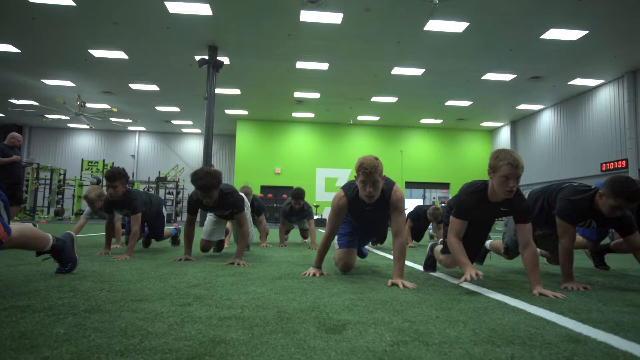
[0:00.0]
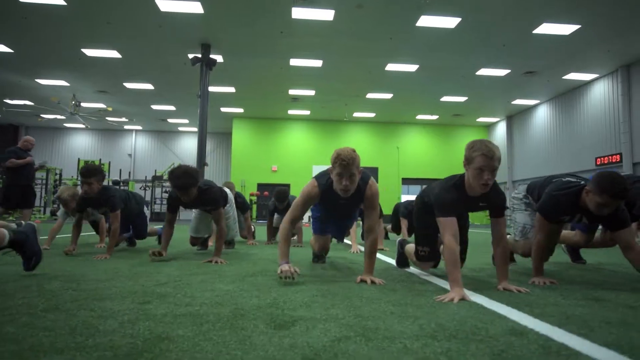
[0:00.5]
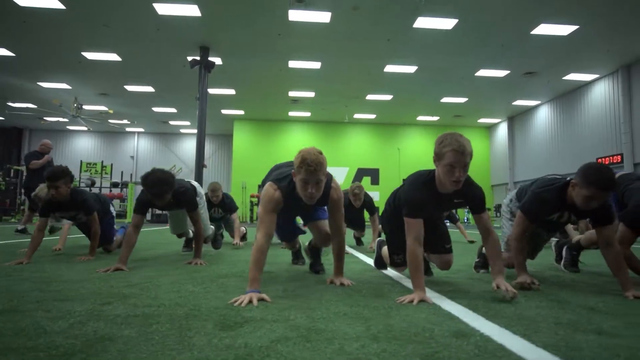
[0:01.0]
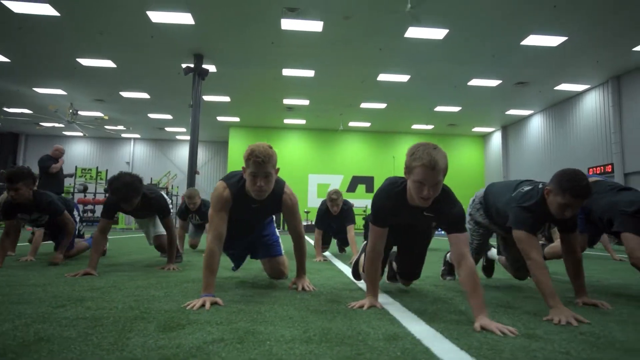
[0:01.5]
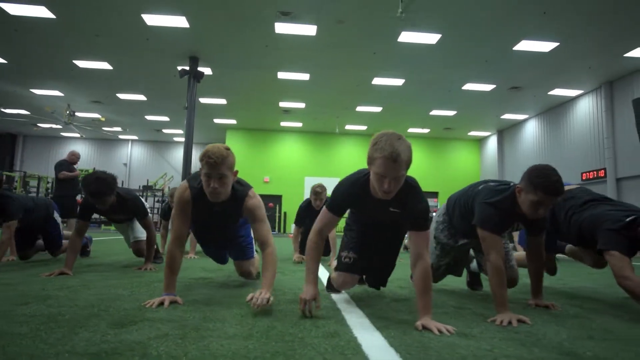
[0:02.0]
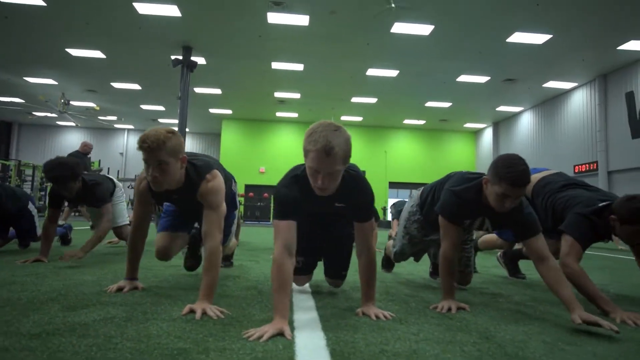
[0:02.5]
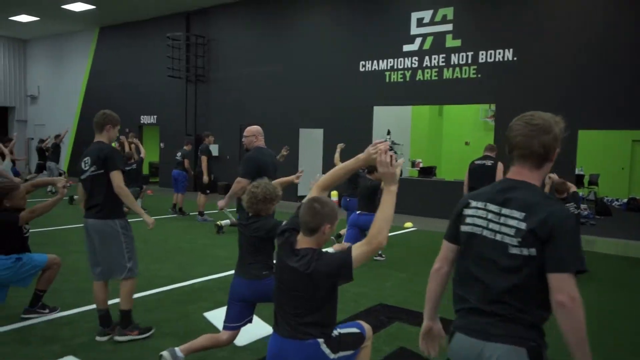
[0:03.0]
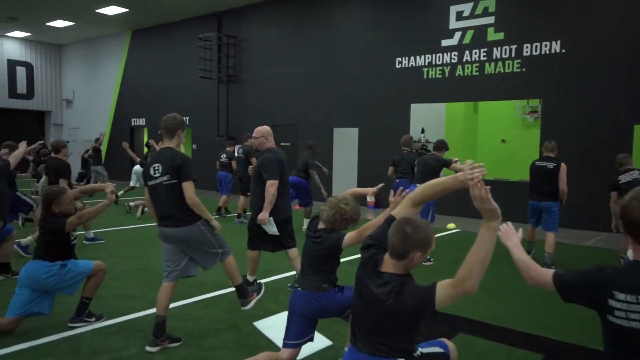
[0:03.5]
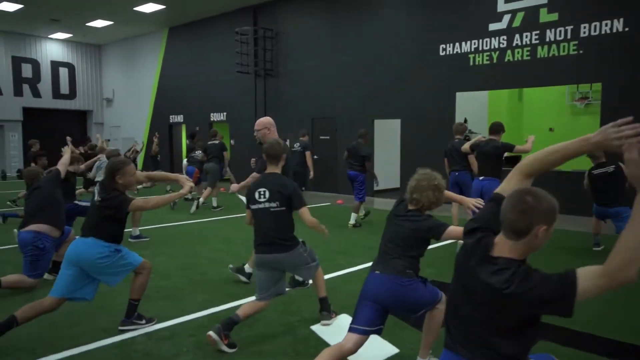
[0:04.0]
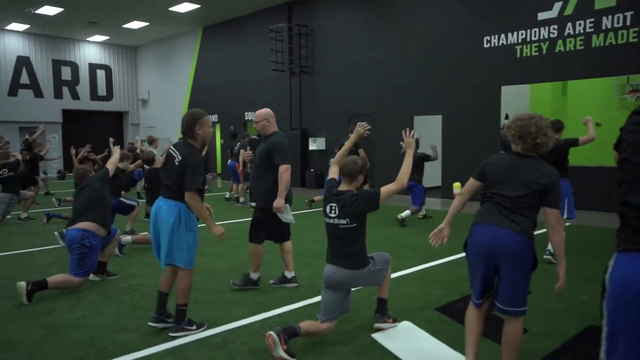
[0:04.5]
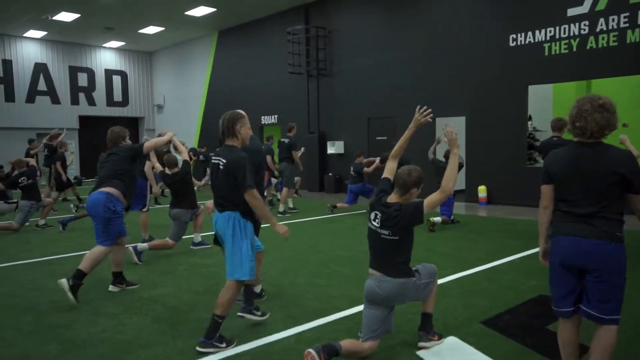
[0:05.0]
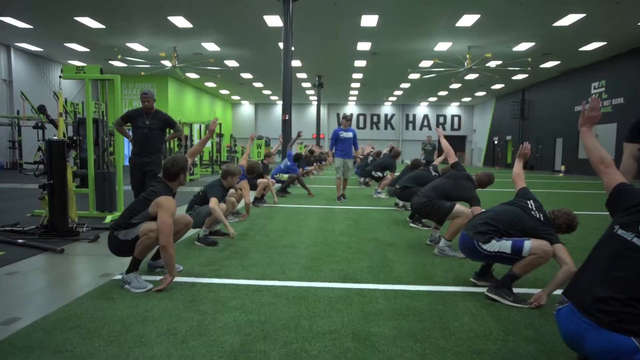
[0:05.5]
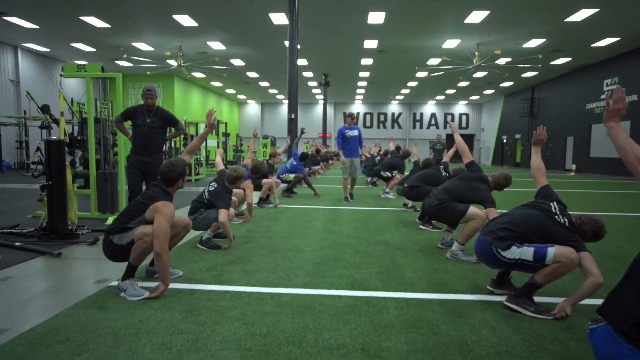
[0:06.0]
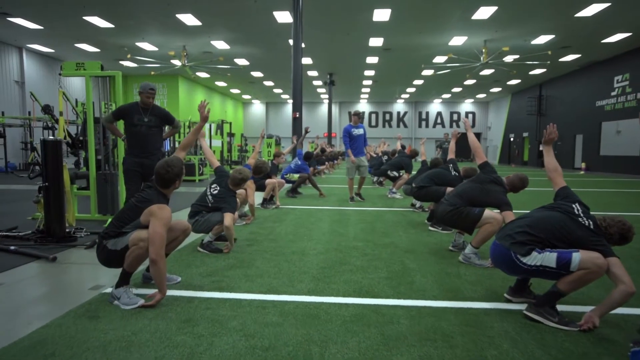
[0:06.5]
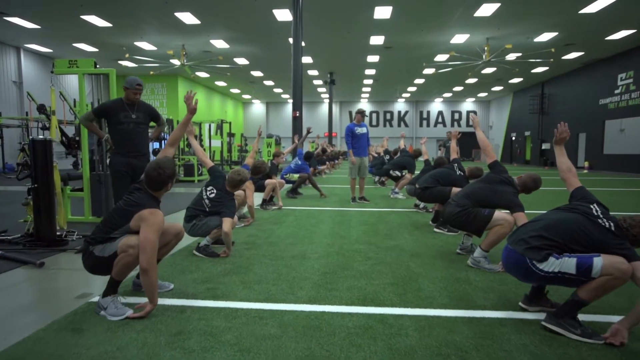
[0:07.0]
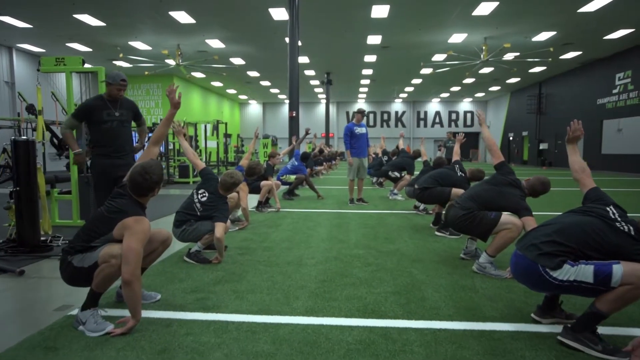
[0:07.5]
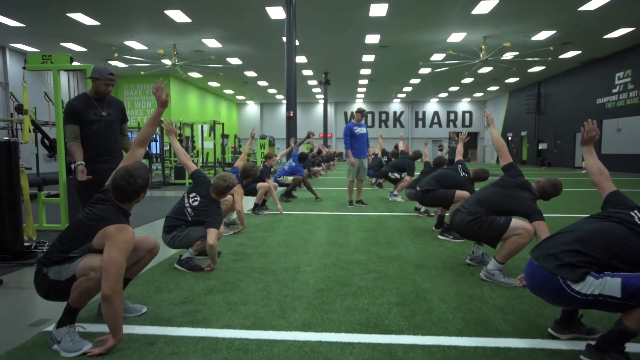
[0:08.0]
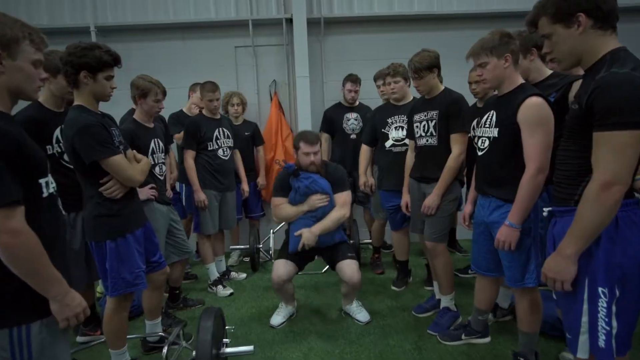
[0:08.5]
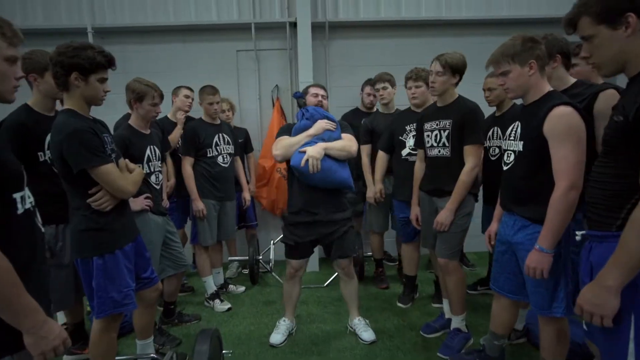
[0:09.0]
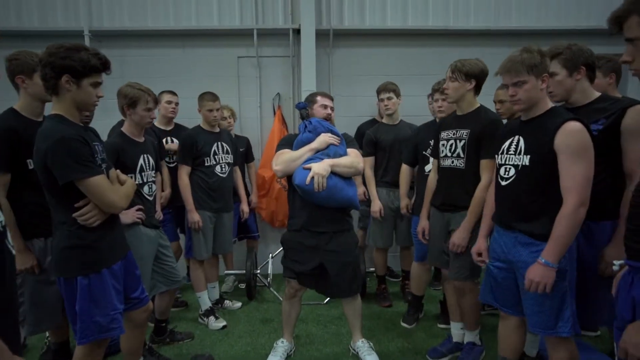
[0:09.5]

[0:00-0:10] About 20 to 25 young people are indoors in what appears to be a gymnasium with artificial turf on the floor. All of them are on the floor on only their hands and the balls of their feet, crawling towards the camera. A different angle of the gym then shows them all on their feet. The wall in front of them is painted black with green and reads "champions are not born, they are made." The young people, who appear to all be young men, do exercises as an instructor walks among them, doing some sort of lunge. Then they are squatted down with one hand on the floor and the other hand raised up, like an inverse triangle. Older gentlemen, presumably instructors, stand among them to help with their form. Next, they are all gathered around a man who picks up what appears to be a sandbag, speaks to a young man, and drops the sandbag.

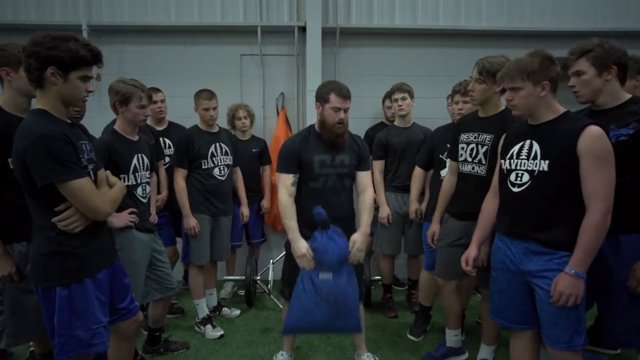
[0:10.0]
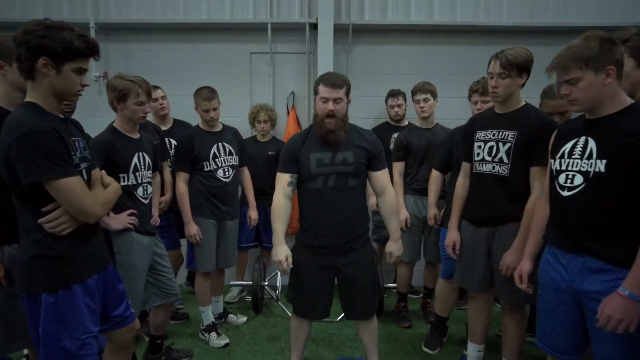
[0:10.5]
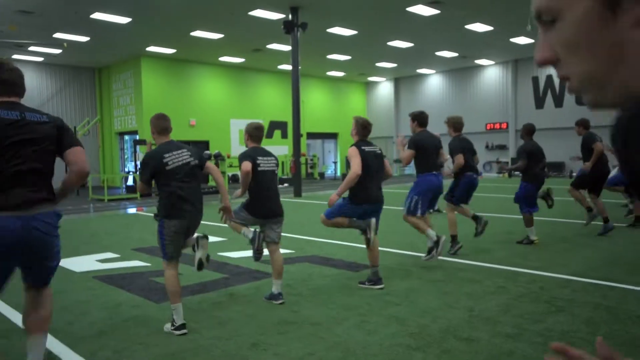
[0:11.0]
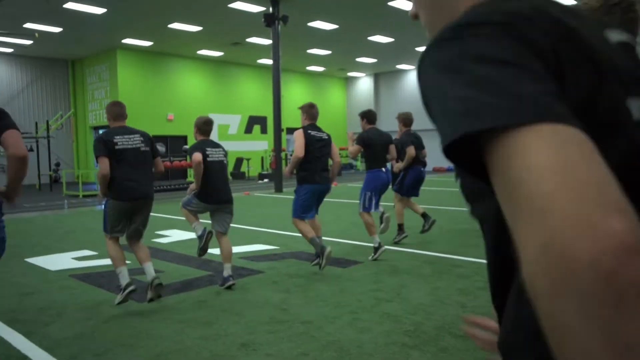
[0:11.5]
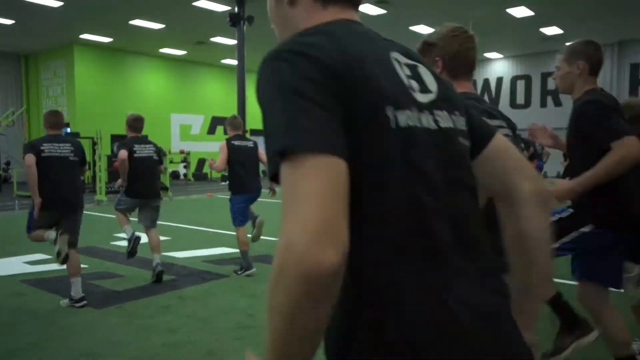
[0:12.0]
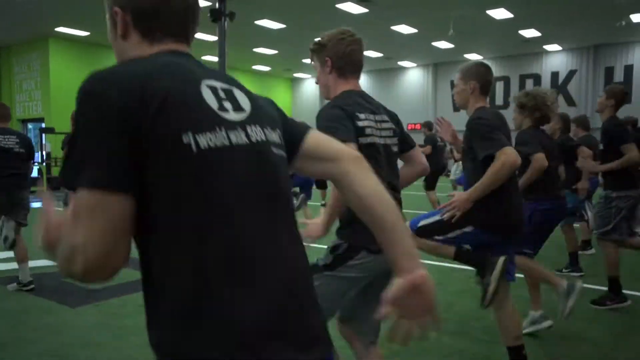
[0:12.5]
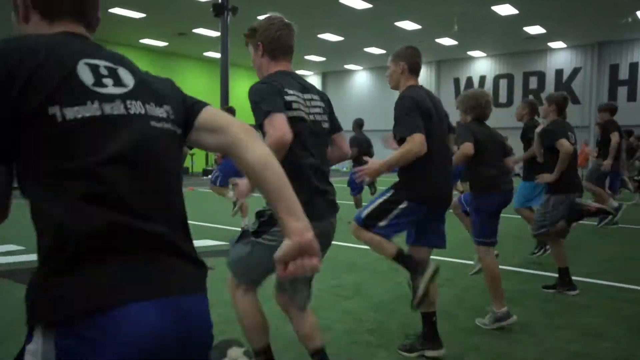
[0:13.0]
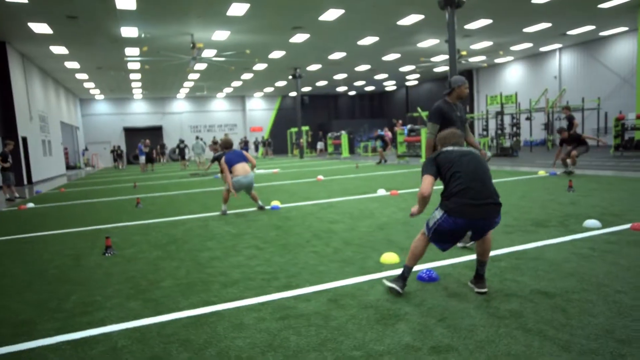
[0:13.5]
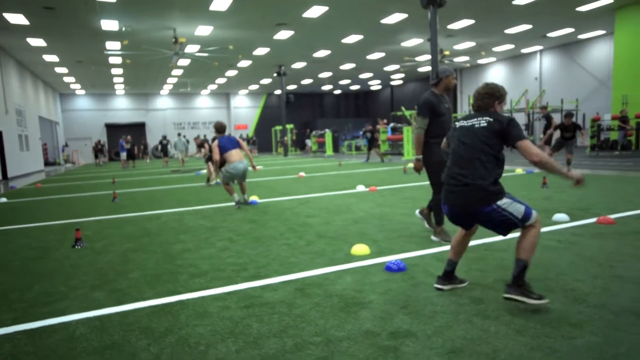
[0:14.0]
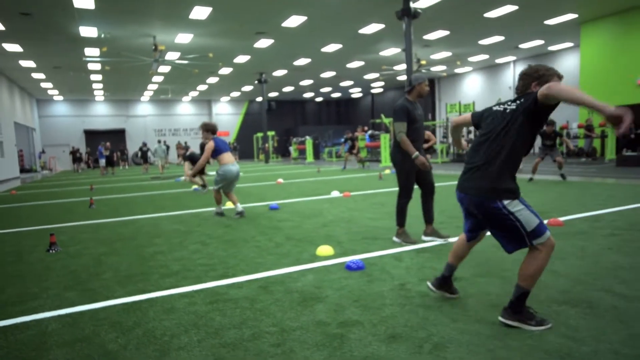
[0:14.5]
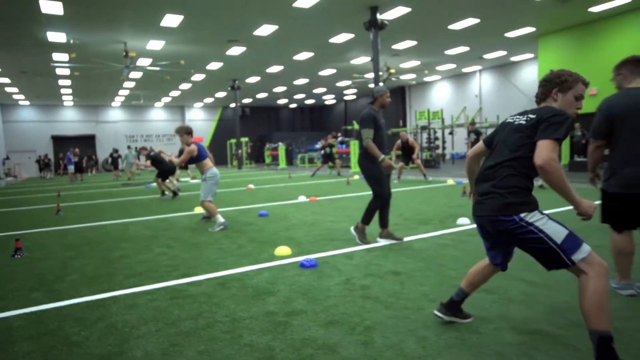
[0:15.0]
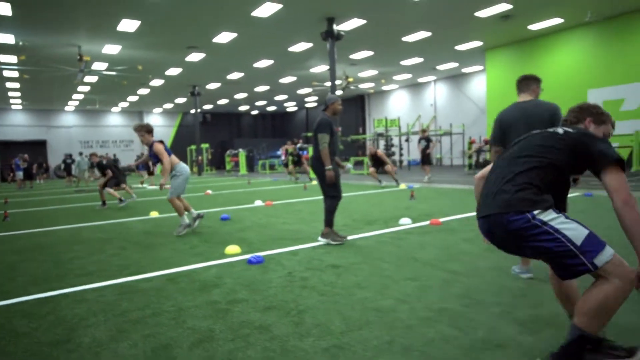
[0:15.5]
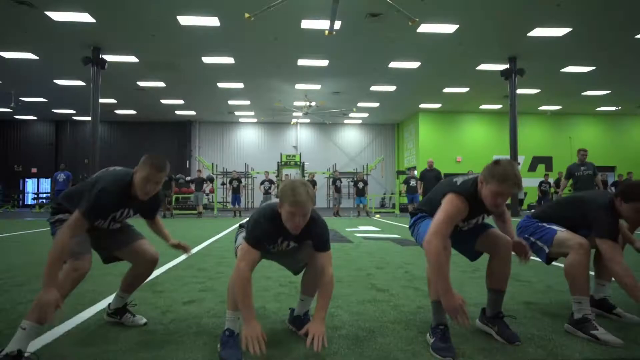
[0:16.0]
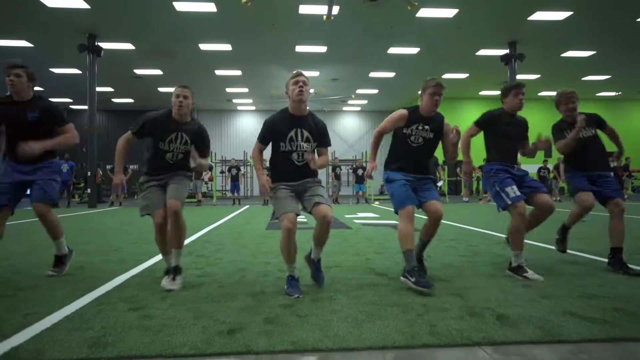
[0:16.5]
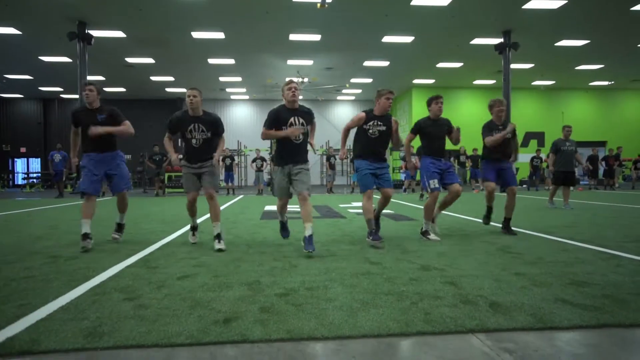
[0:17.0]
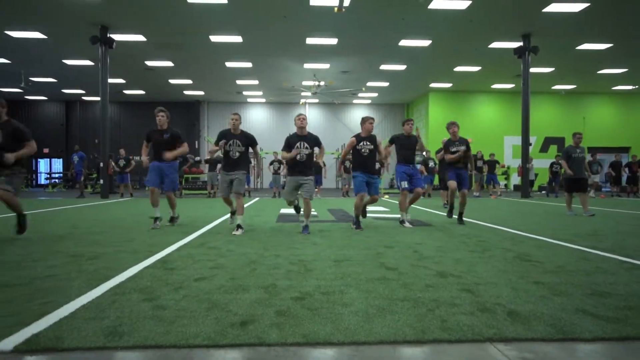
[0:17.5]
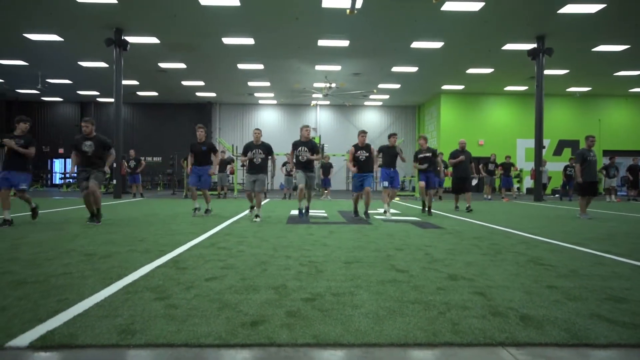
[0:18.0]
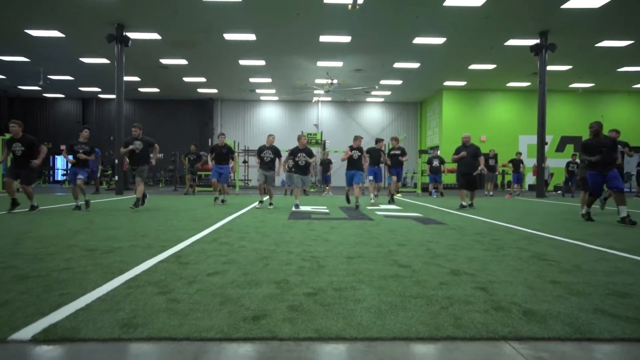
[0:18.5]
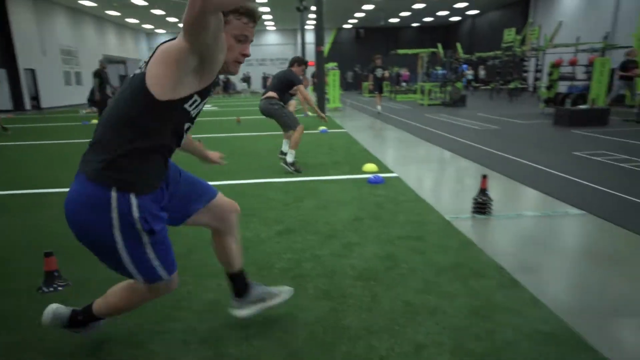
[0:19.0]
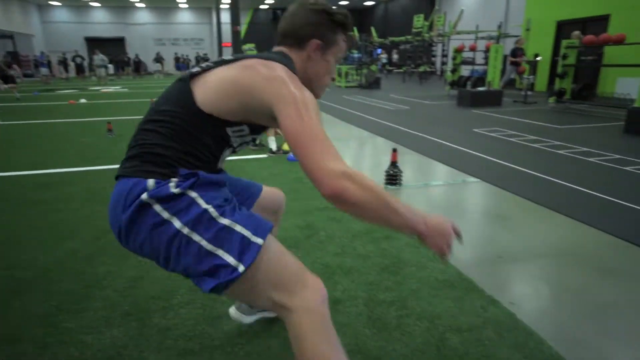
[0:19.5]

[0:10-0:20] The gentleman drops the sandbag, and the video moves to the young men lined up in rows doing a high-step, fast jog across a floor painted like a football field. Next, the same young people are on this floor with bright blue, red and yellow beanbags at different places on it, and they appear to be snapping a football that is not there, pantomiming in order to practice. A line of young people goes down into a downrunner position and then runs backwards. They then run forwards and touch one of the brightly coloured discs or beanbags on the floor.